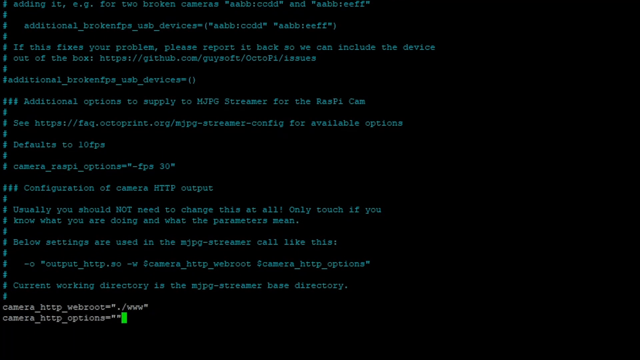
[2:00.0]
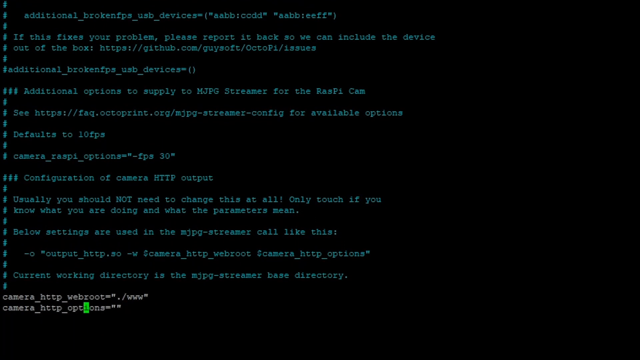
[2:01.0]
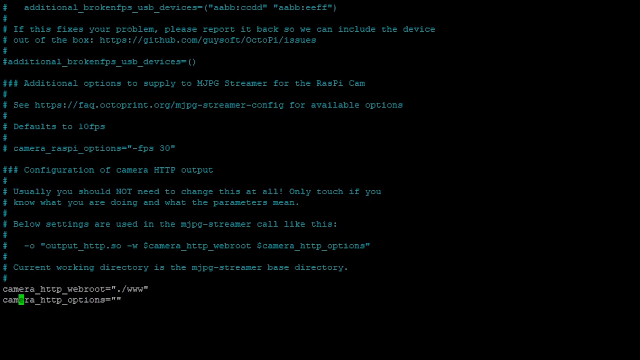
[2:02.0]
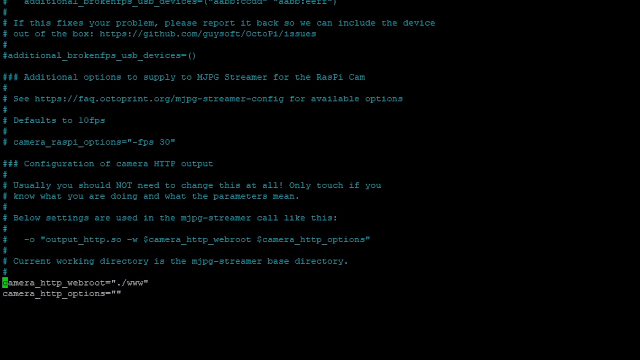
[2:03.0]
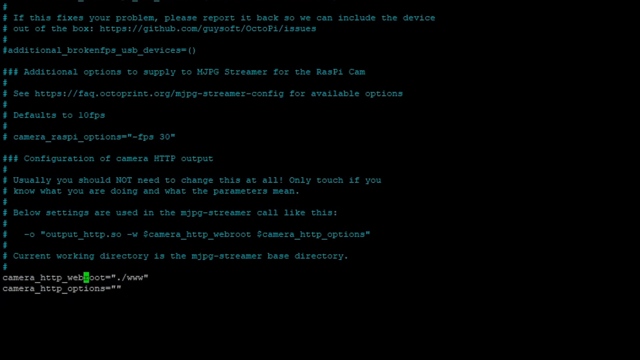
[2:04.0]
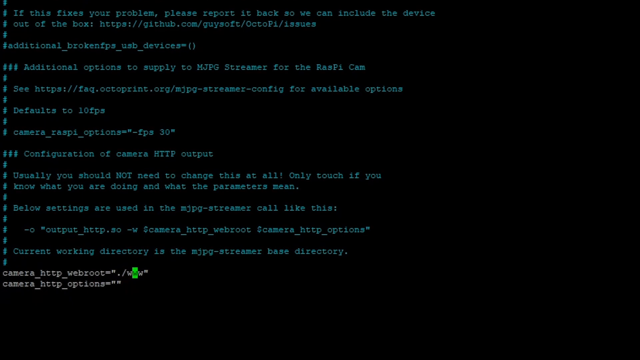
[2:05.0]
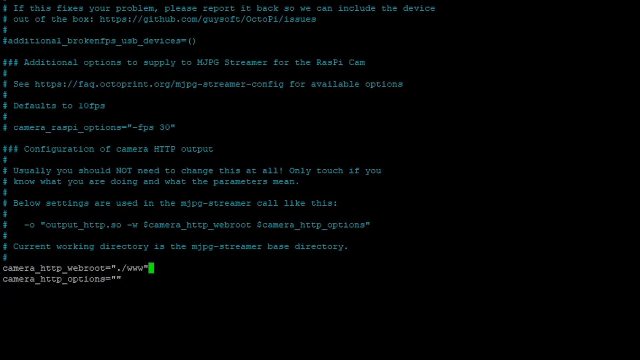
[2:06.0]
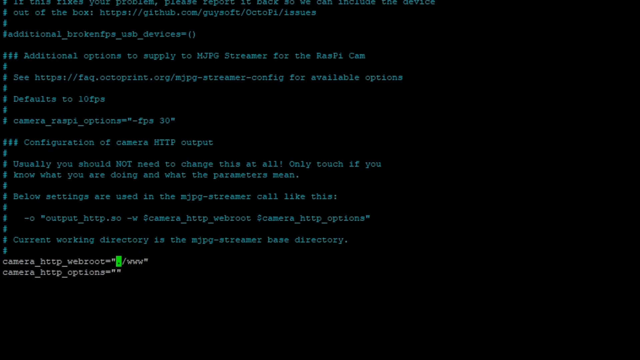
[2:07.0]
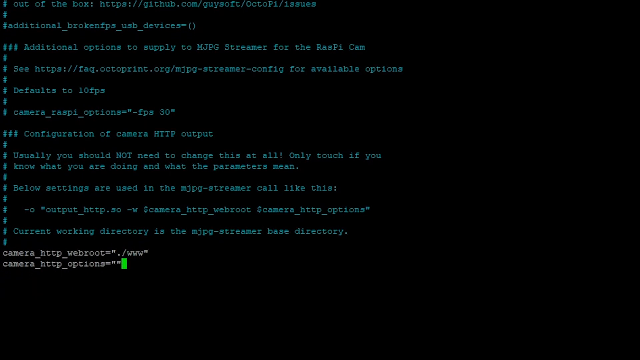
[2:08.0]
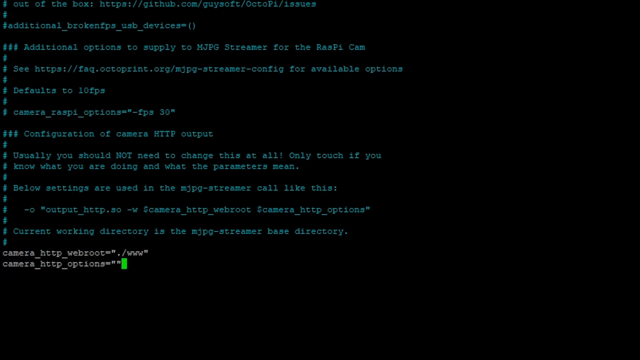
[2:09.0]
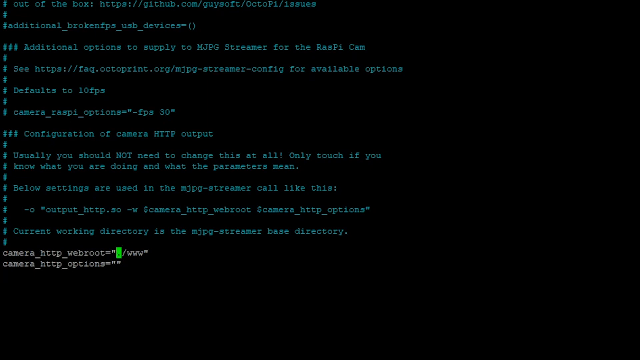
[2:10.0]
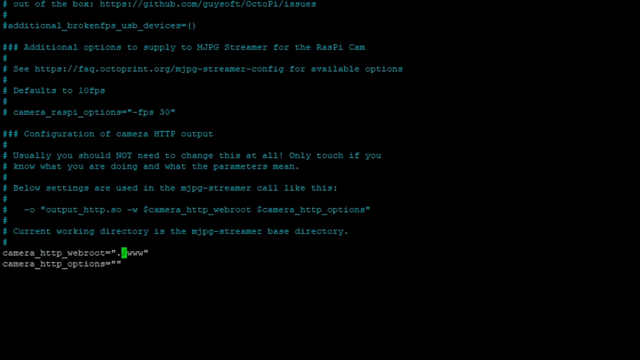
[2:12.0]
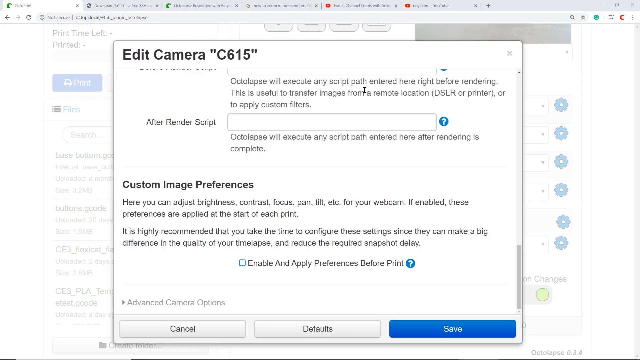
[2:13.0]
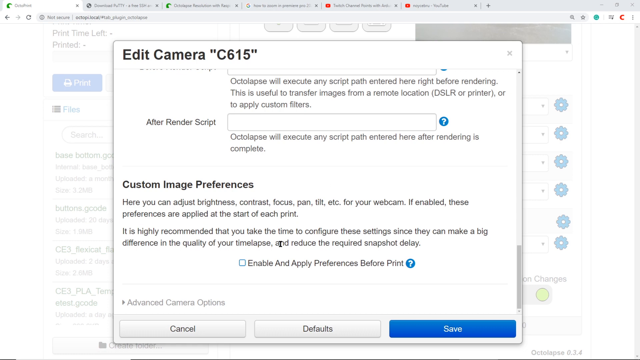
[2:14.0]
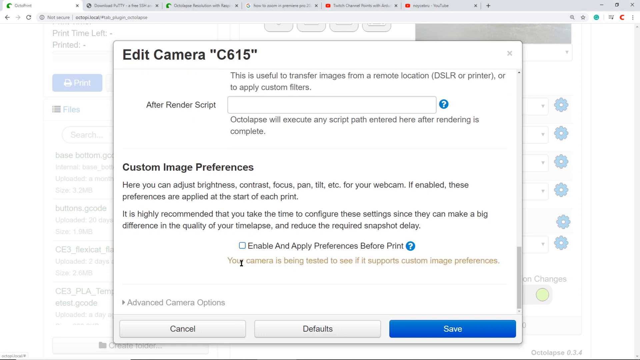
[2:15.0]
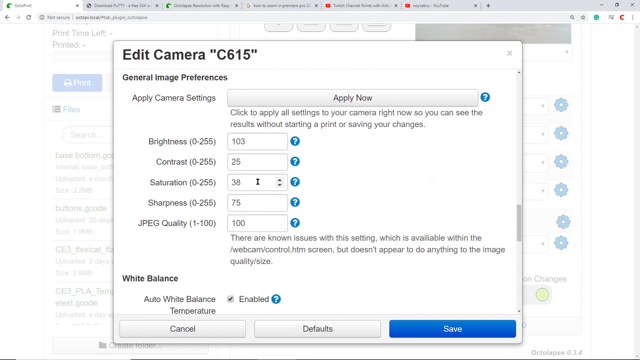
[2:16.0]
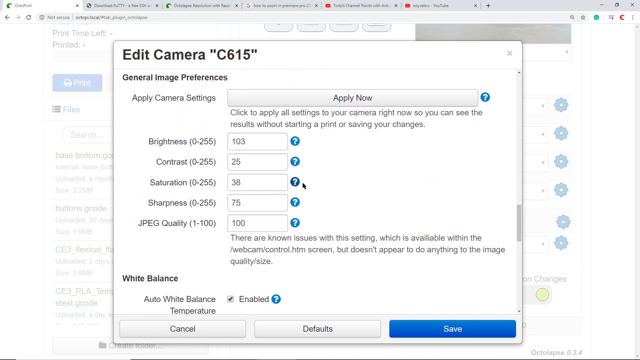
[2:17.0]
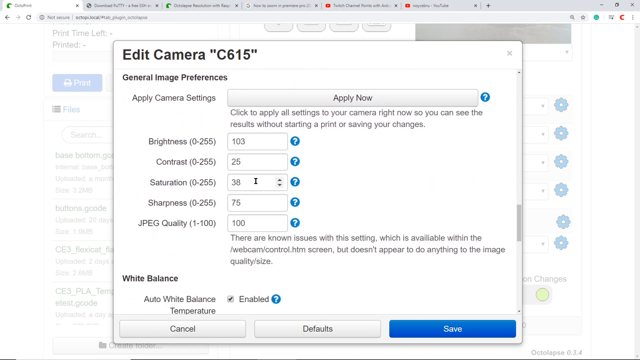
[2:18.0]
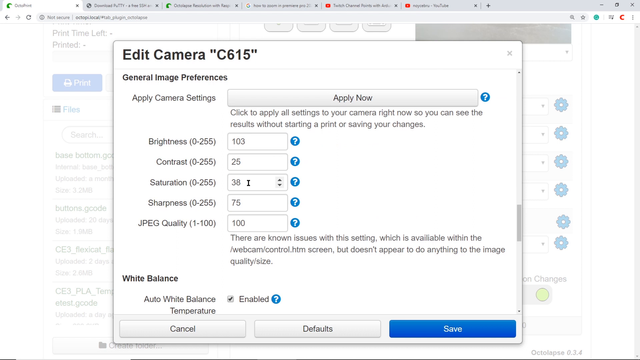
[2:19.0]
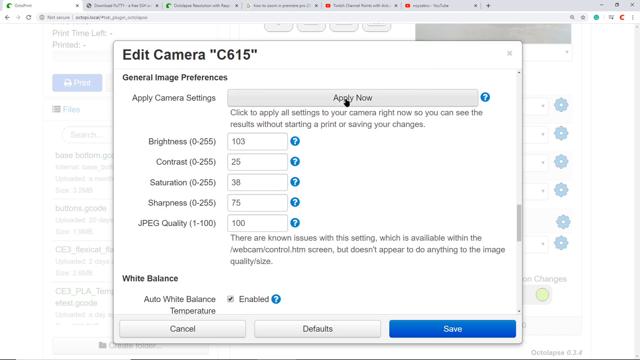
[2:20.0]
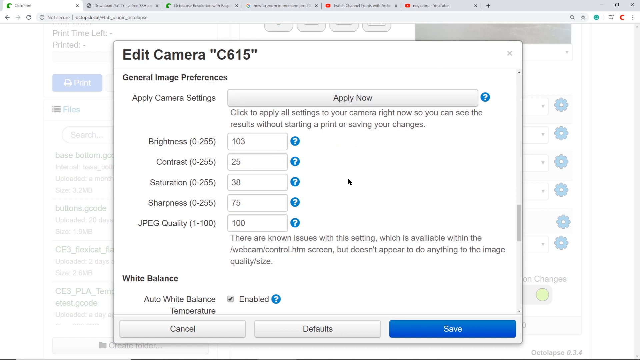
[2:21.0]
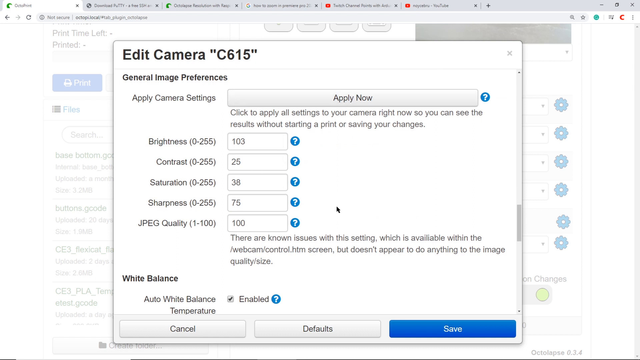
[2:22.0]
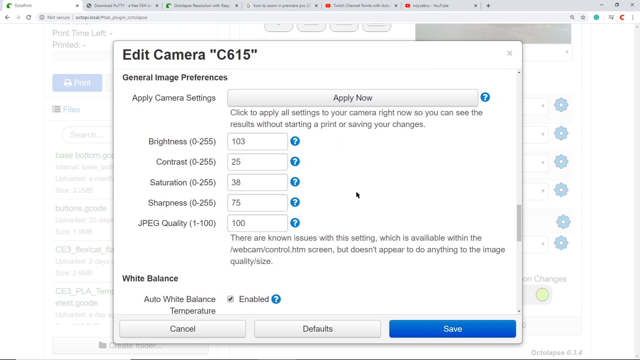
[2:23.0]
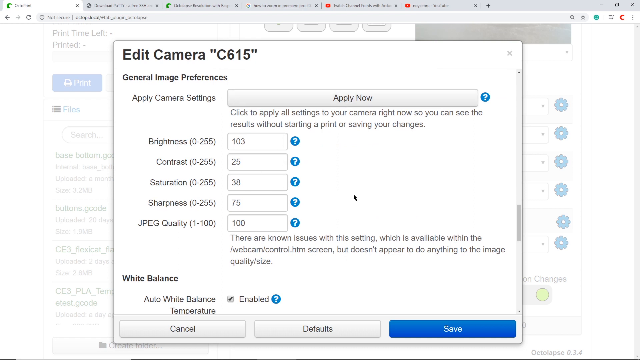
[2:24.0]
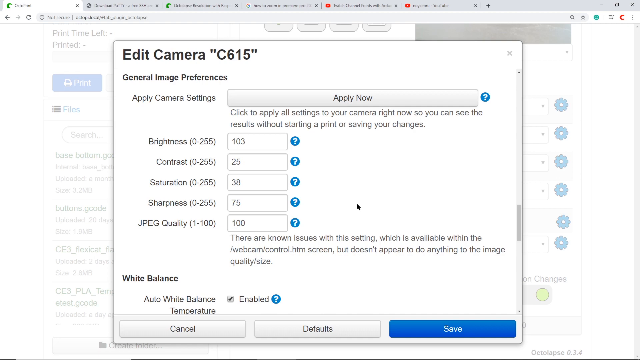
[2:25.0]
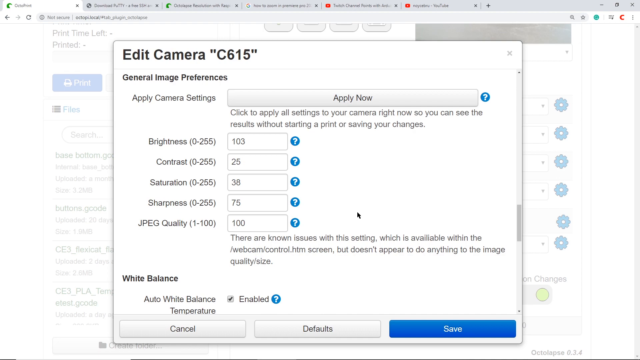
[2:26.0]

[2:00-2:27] The man shows coding on a black screen with a lot of blue code. He scrolls the page up, with a green rectangle marking the cursor position, and lands on "camera.http webroot". He then opens a pop-up window called "Edit Cameras C615", with general image preferences, an option to apply camera settings, and settings for brightness, contrast, saturation, sharpness, JPEG quality and white balance. He hovers over saturation, then over apply now, then the cursor comes back down and ultimately nothing happens. The window sits on top of what appears to be a list of files, including names like "Base Bottom", "Buttons.Good", "CE3", "FlexiCat" and "Fiat", and there is a print button.